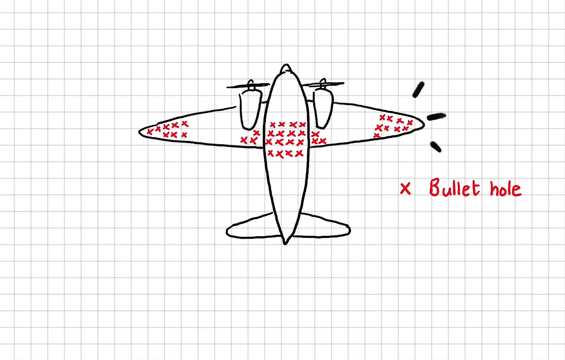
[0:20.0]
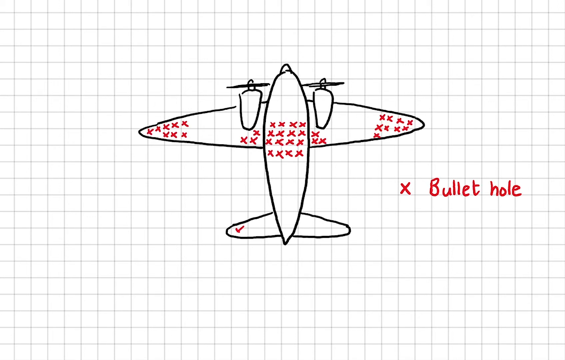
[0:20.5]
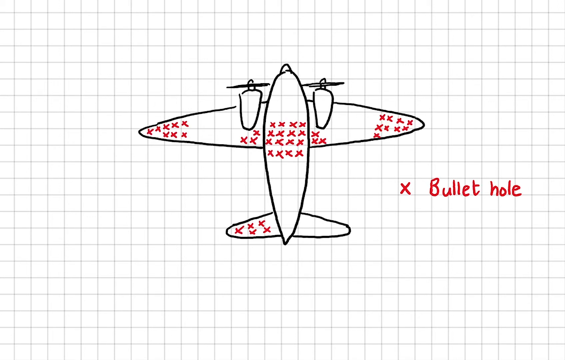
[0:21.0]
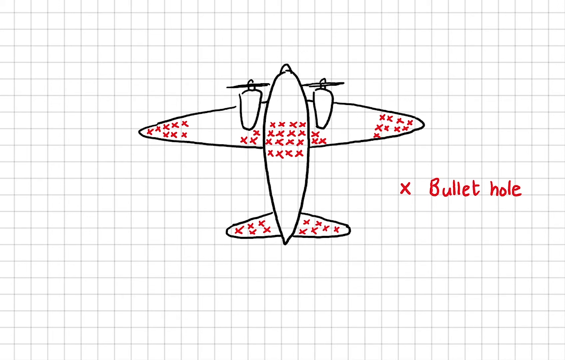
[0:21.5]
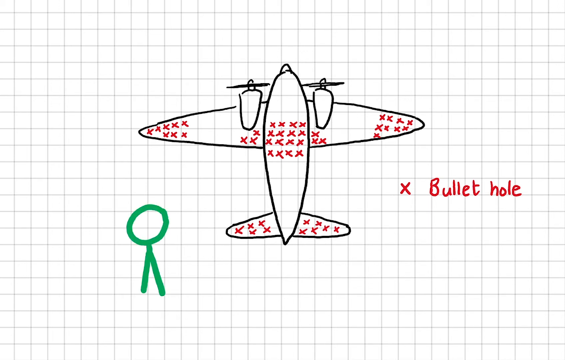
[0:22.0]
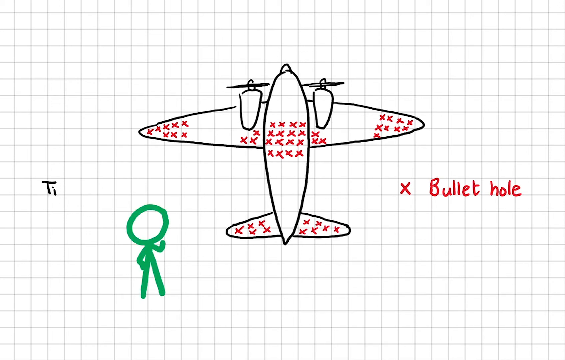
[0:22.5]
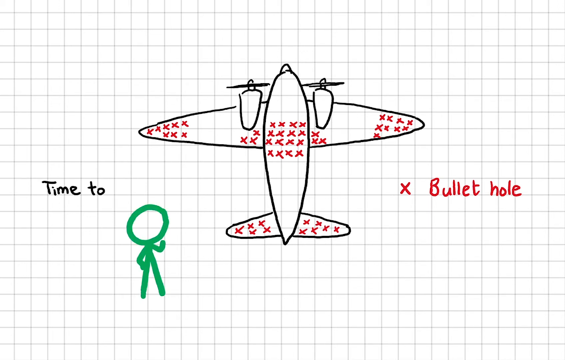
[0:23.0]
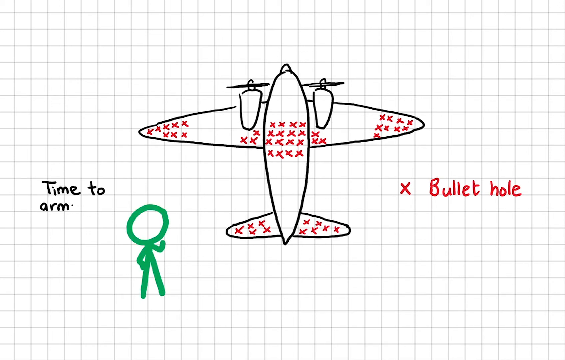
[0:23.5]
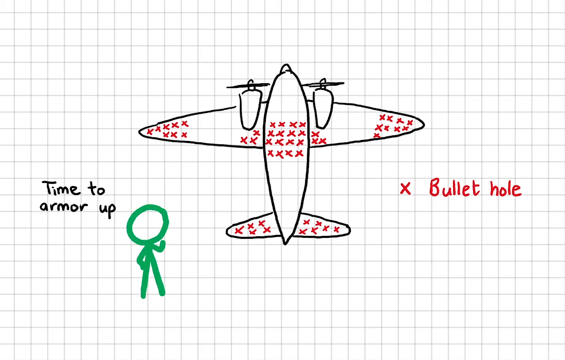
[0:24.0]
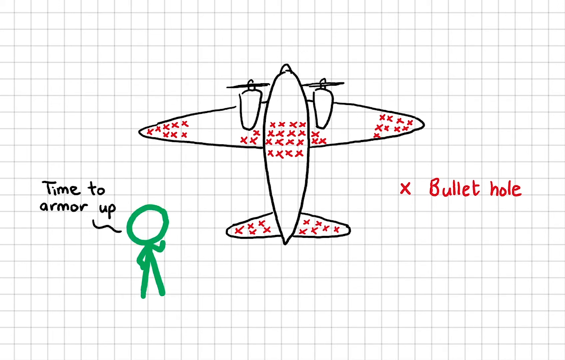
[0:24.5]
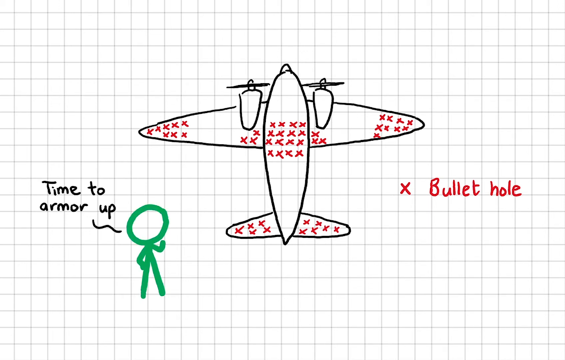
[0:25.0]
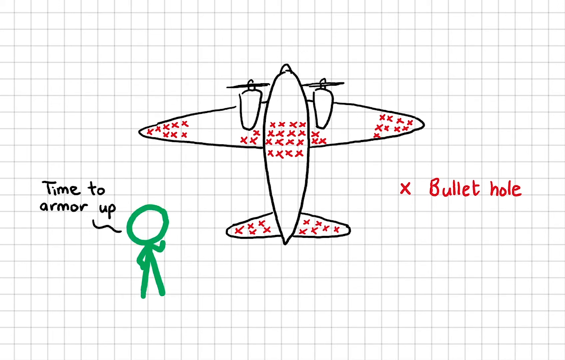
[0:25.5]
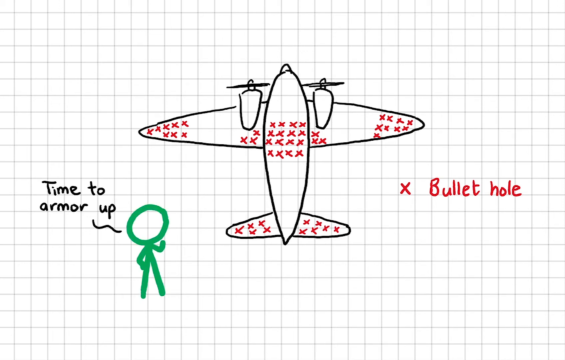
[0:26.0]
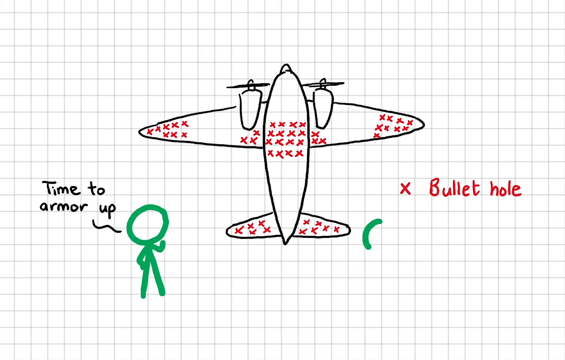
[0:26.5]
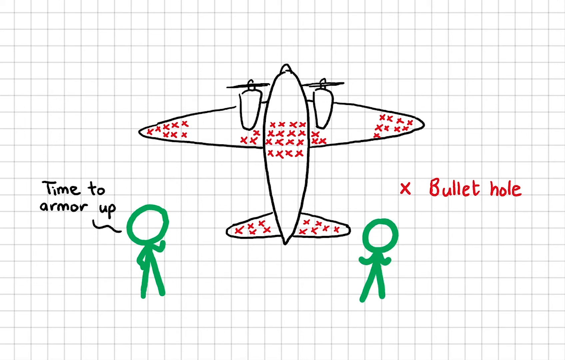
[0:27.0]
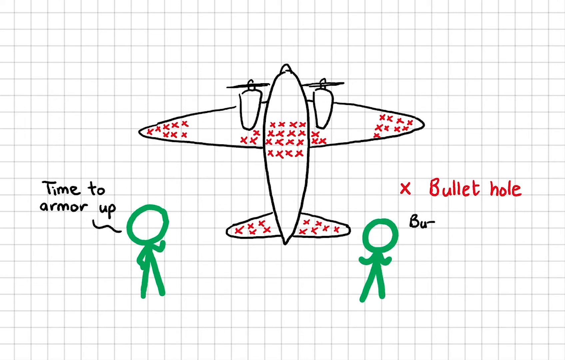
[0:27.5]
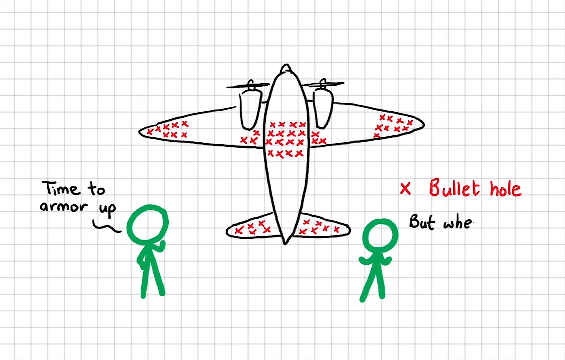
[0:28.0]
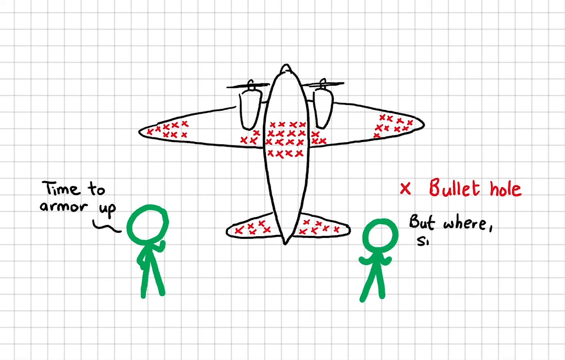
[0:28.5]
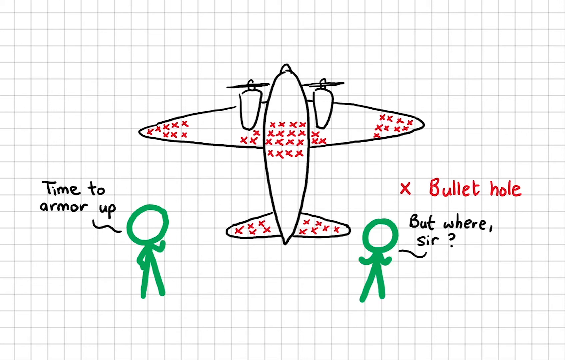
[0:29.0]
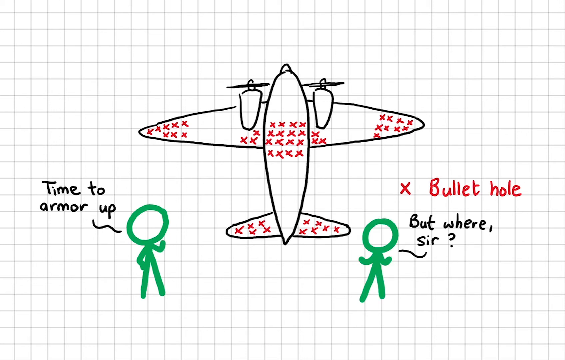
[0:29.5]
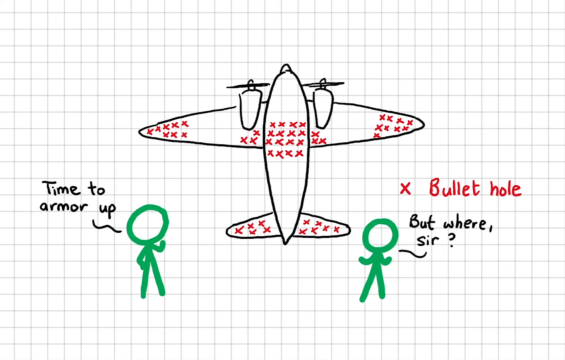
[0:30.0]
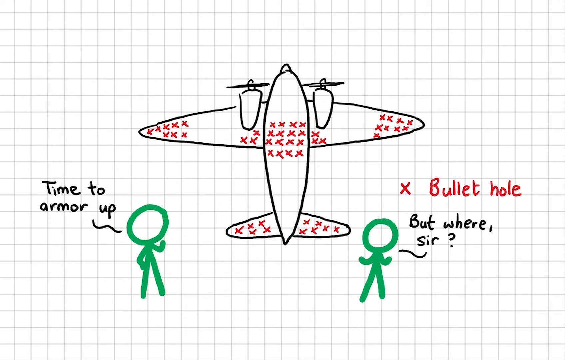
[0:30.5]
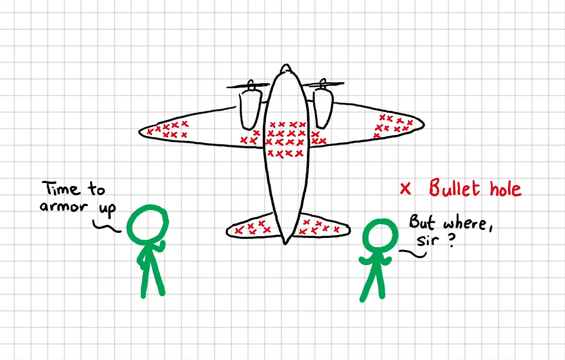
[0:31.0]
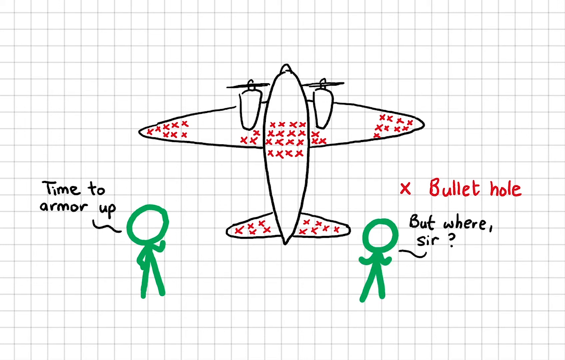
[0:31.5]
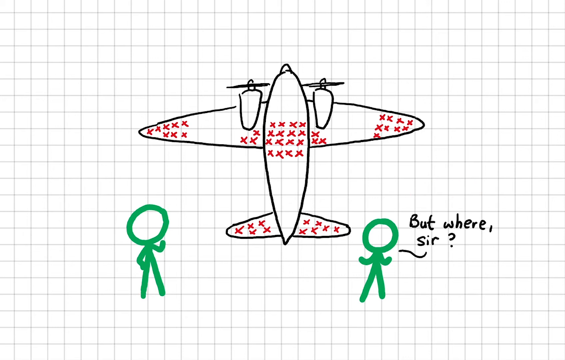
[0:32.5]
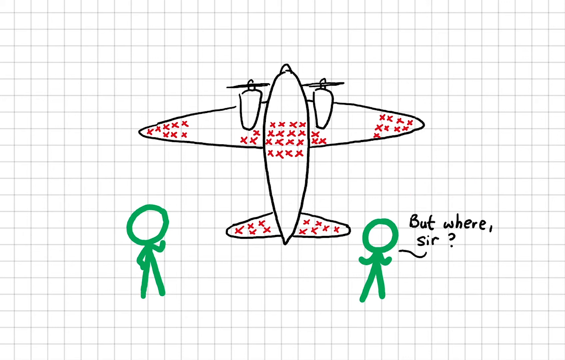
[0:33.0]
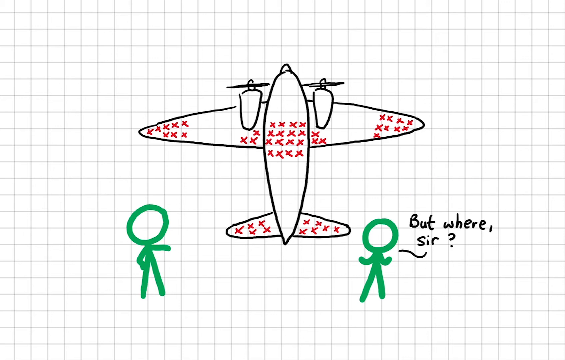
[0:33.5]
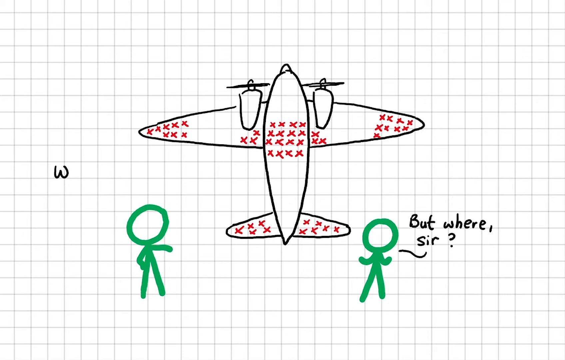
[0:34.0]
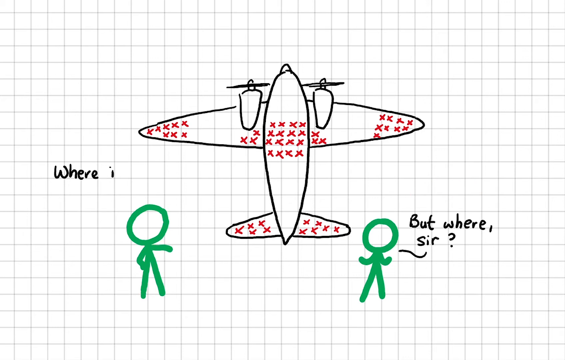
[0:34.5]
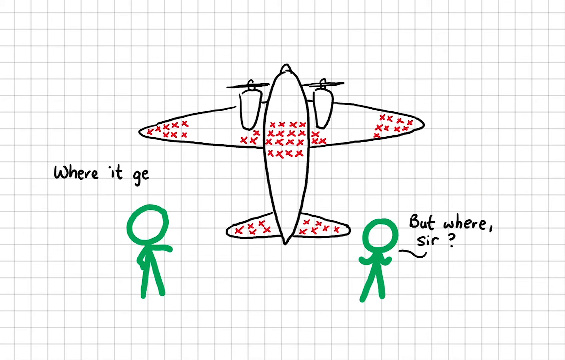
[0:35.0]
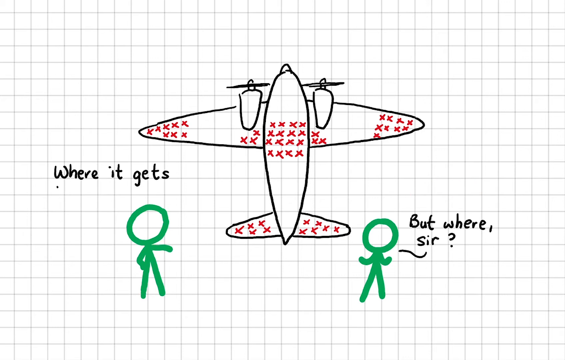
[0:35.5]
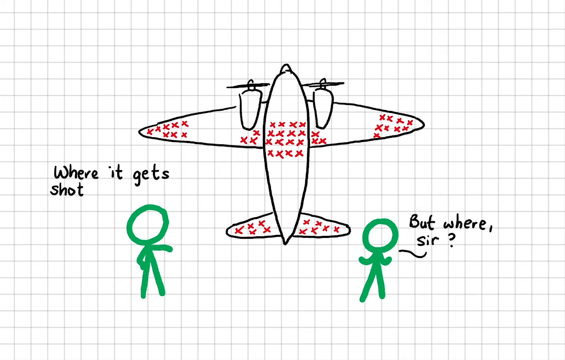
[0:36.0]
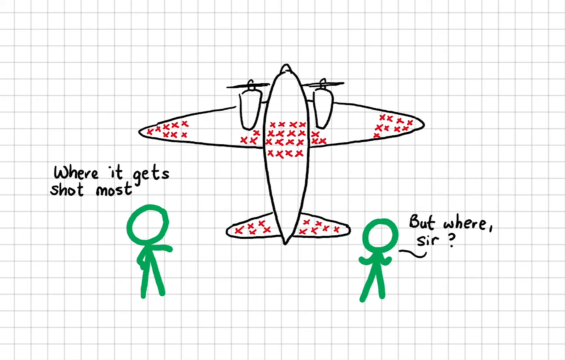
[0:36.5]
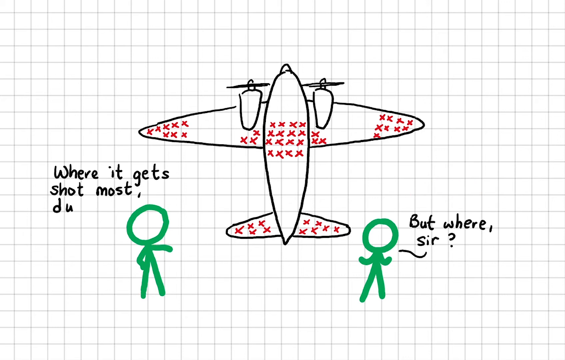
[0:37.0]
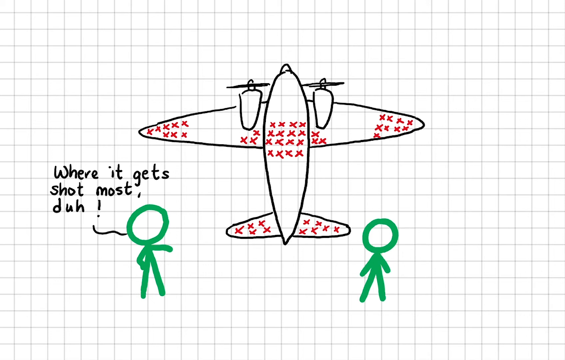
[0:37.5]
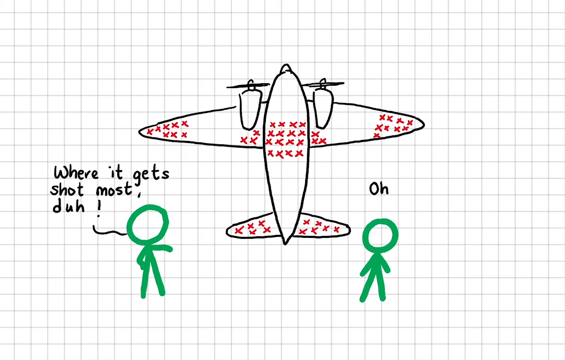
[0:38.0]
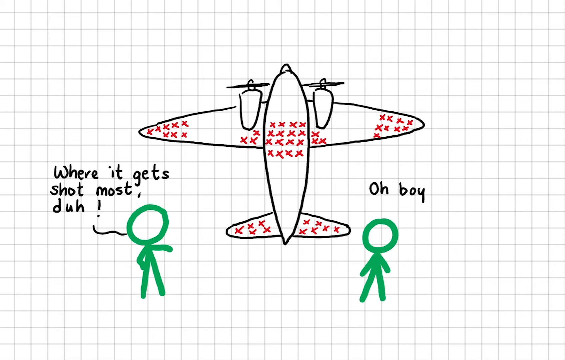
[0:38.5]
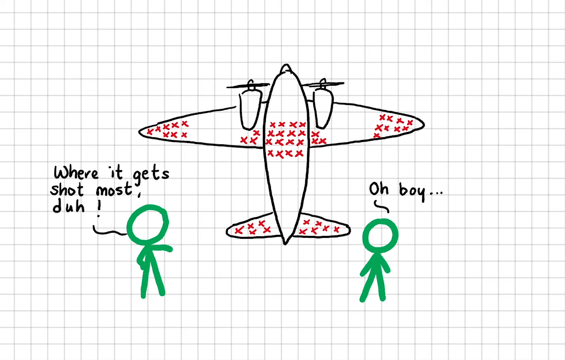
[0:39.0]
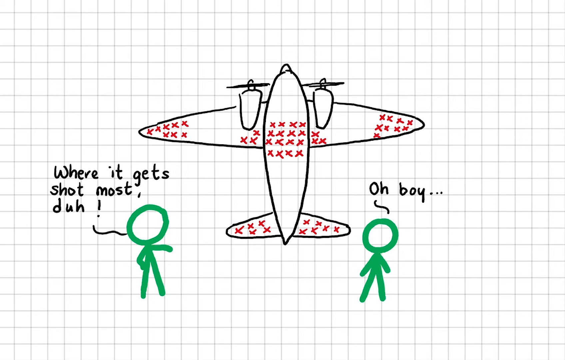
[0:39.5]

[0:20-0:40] The red x's on the plane represent bullet holes found on the plane. On the left there are 11 bullet holes, and on the right-hand side there are 12. On the plane's body there is a set of 4 bullet holes, and in what looks like a row there are 16. More bullet holes then appear on the wings: 5 on one side and 6 on the other. He then draws a stickman sketch in green, and on the left-hand side he writes in black text "time to armor up", pointing to the green sketch. On the right-hand side he draws another green stickman, and one character asks the other a question. The x bullet holes disappear, and more text appears on screen as the character on the left asks a question that includes "will it get shot". An exclamation mark appears, and the other character responds by saying "oh boy".